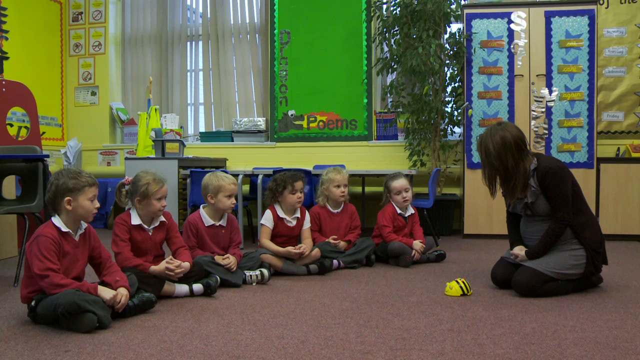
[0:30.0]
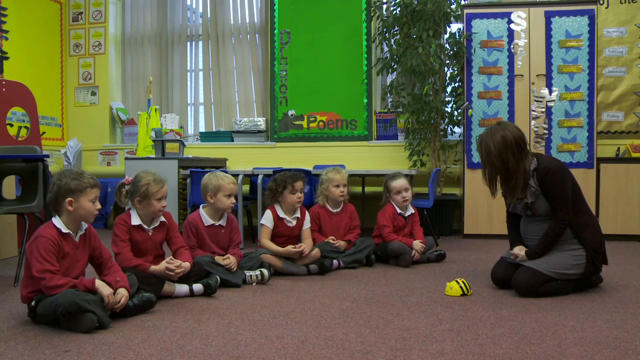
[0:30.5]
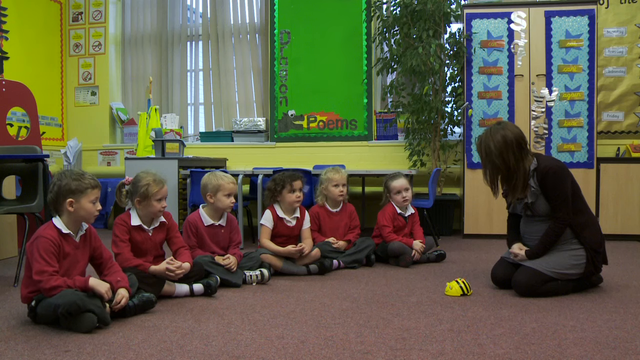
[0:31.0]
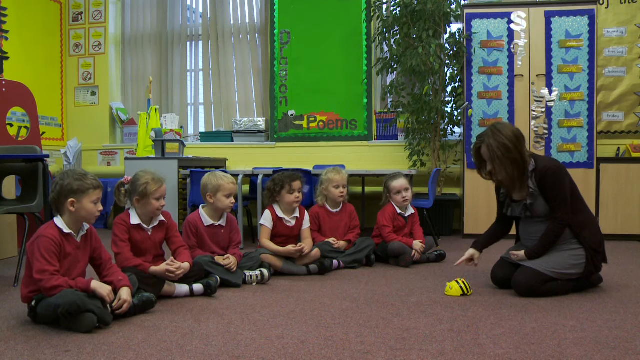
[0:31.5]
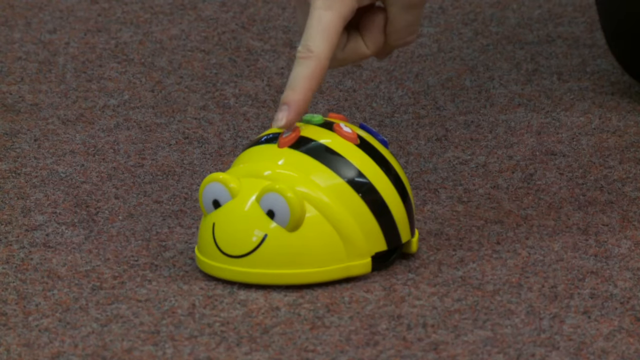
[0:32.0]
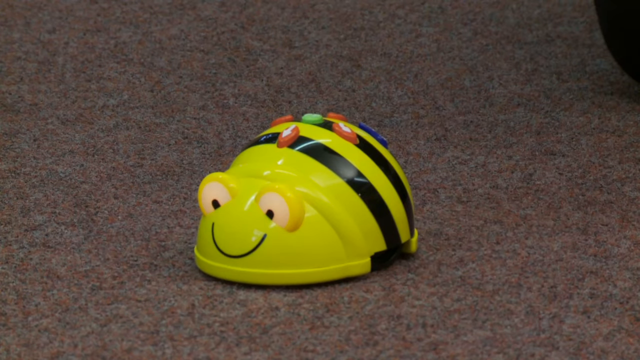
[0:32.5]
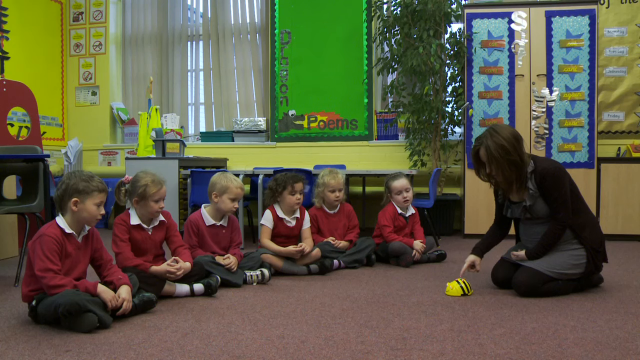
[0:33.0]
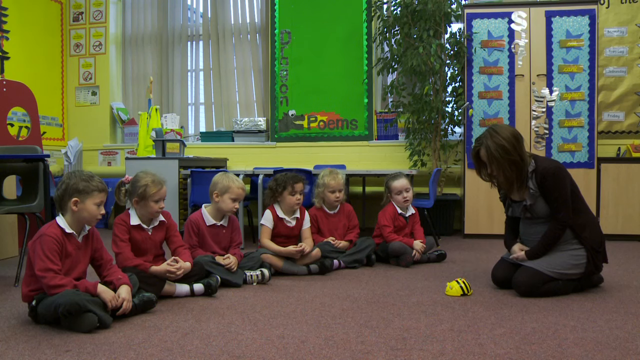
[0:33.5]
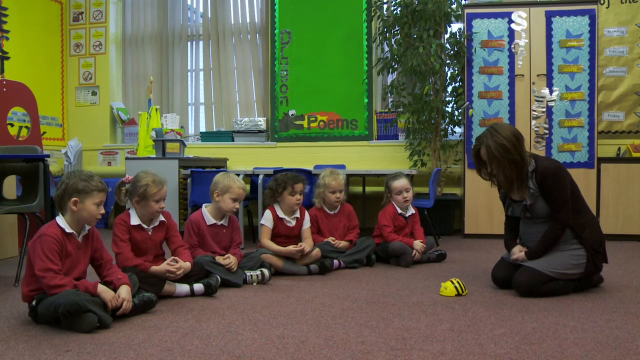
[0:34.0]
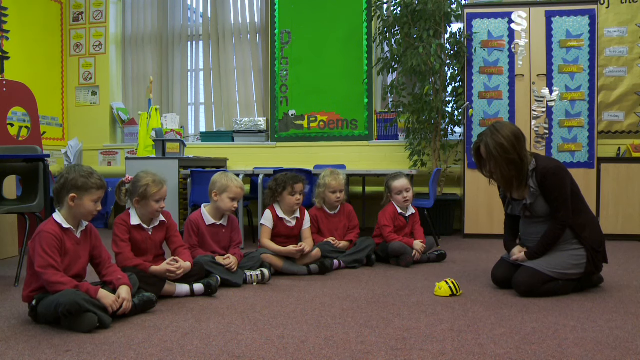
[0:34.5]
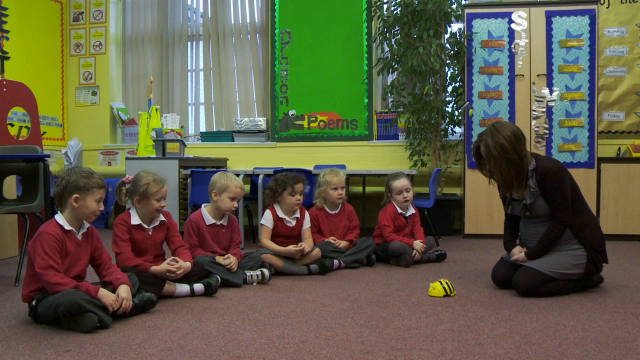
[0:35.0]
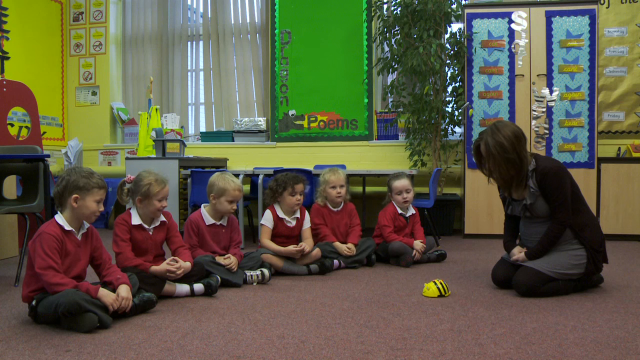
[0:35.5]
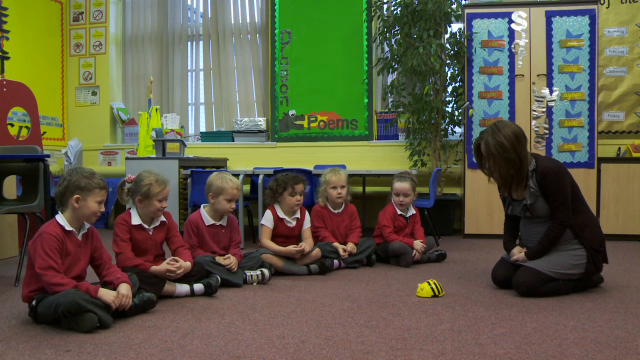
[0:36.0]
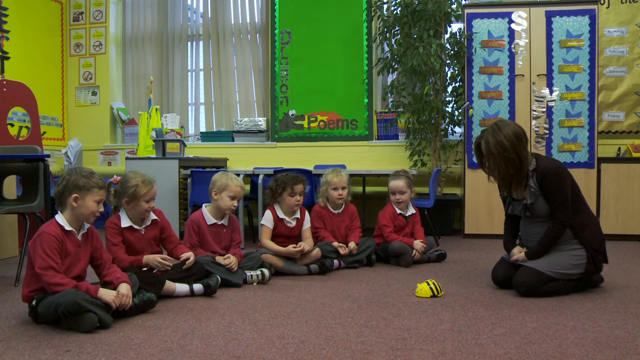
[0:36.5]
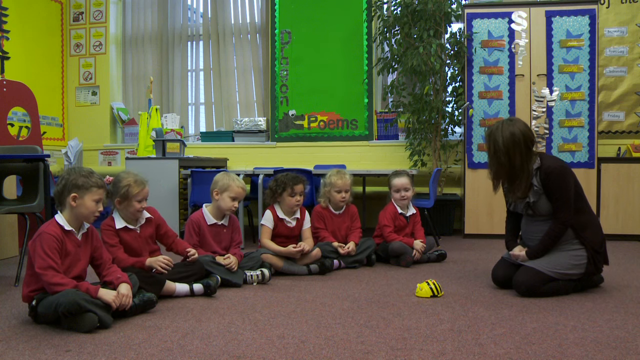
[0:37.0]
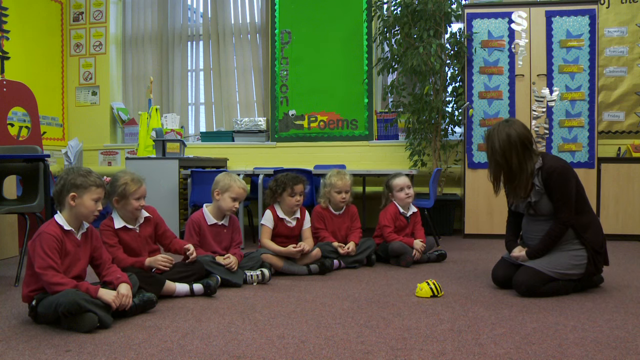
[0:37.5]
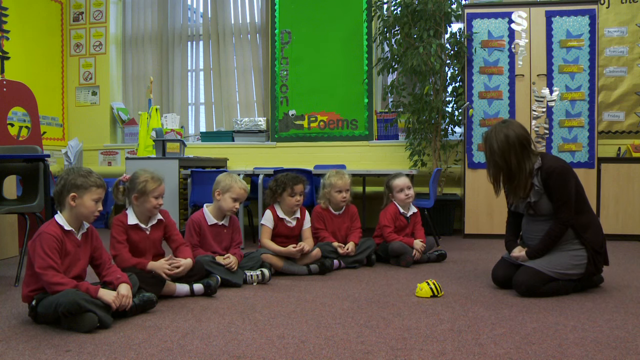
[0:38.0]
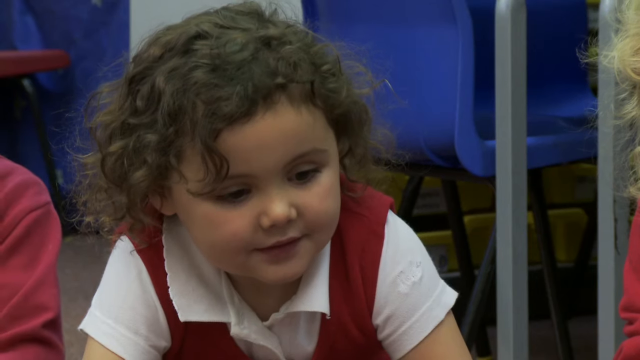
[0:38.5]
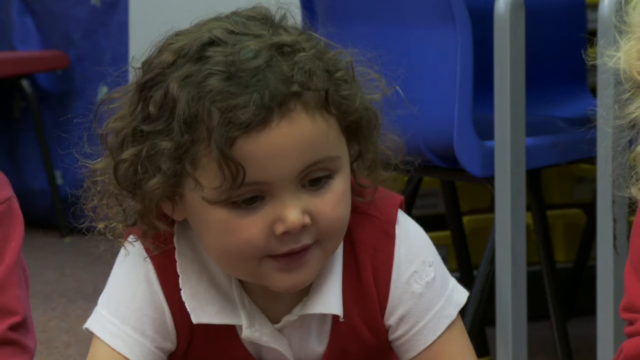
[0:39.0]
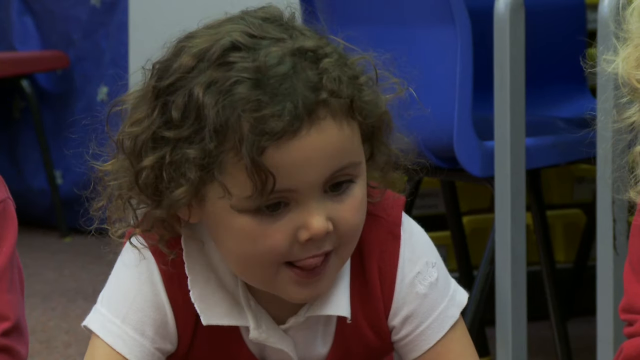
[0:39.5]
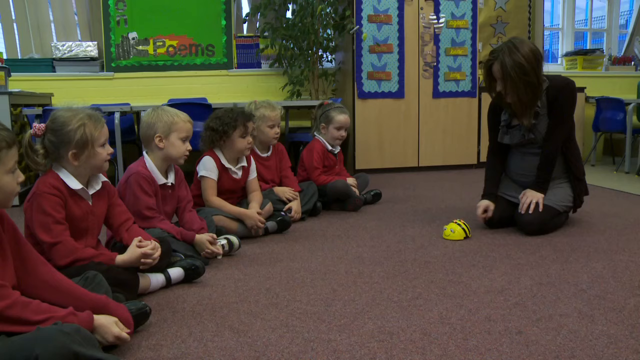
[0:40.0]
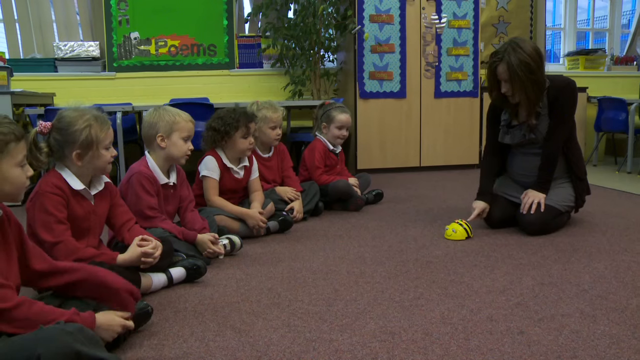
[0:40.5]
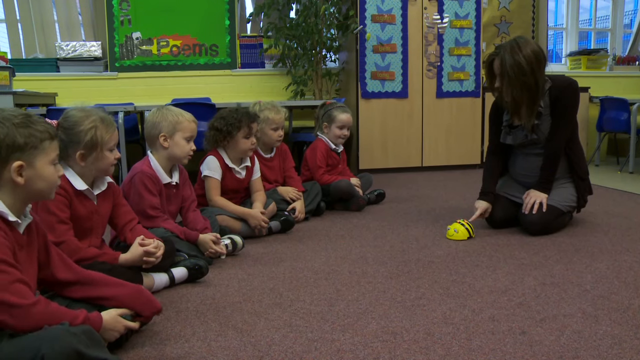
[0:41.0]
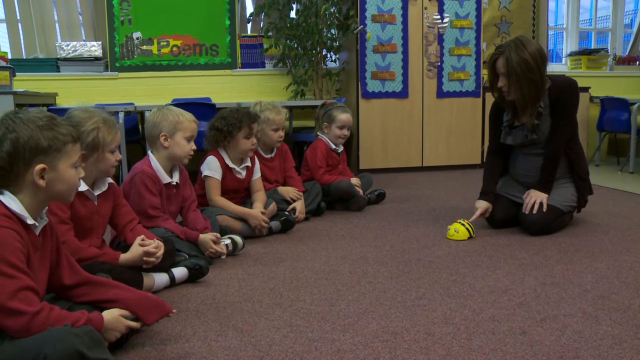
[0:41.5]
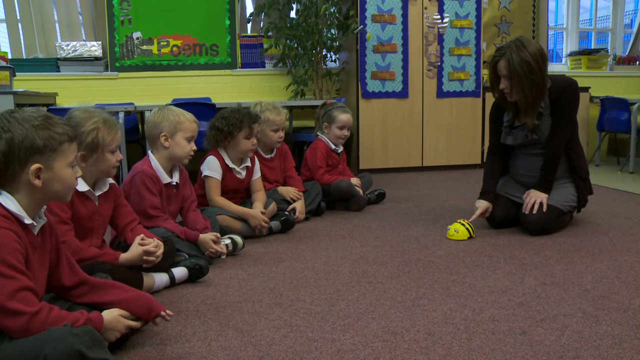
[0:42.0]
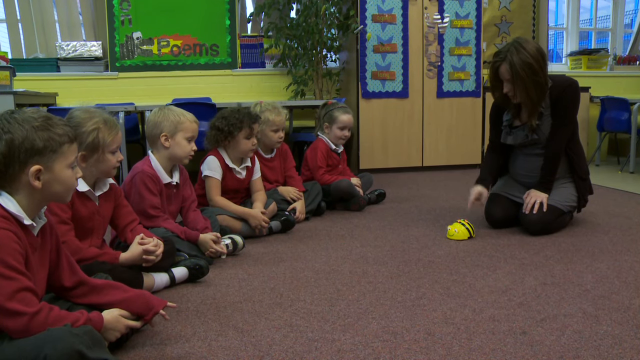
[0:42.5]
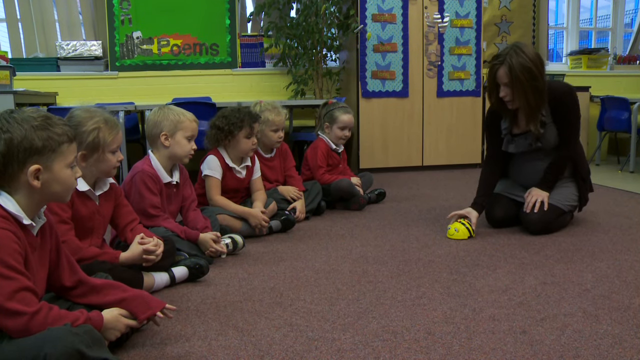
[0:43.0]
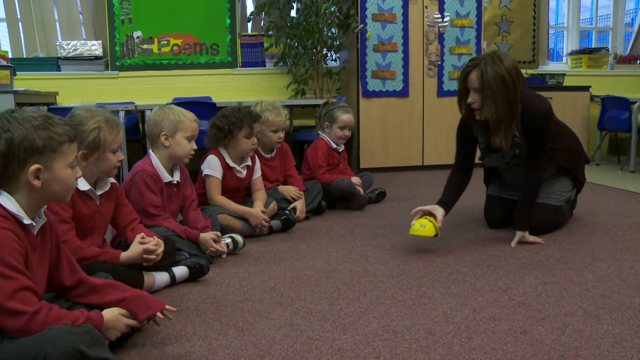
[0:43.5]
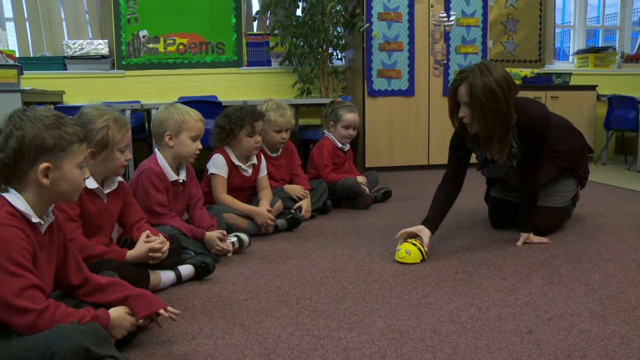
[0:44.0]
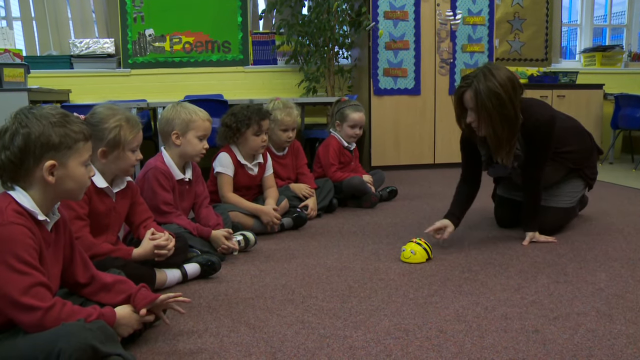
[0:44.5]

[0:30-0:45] The woman is in the classroom with the six small children. She places the bee bot toy in front of her and presses a button; the bee's eyes light up and it begins to move towards the children. As it moves, all of the children visibly perk up or make some gesture of surprise. The woman picks it up, places it down in front of the children again and selects another button at the very top, which looks red or dark orange. The camera pans to a child's face as the bee bot moves towards the group, then pans back to a full view of the woman in front of the group with the toy in front of her. She presses additional buttons on the side of the bee bot.